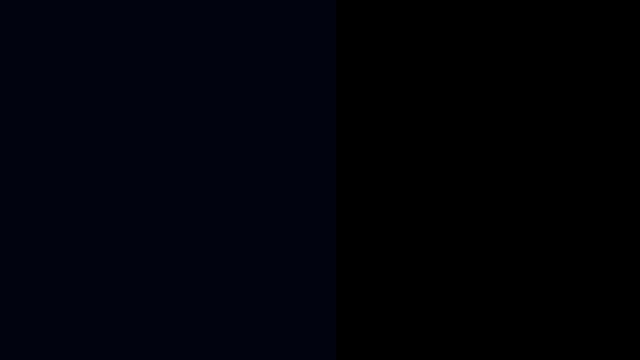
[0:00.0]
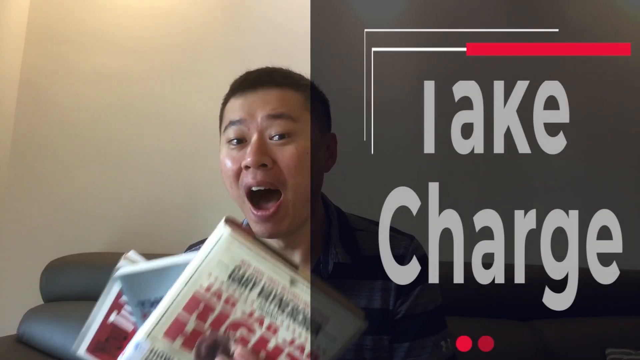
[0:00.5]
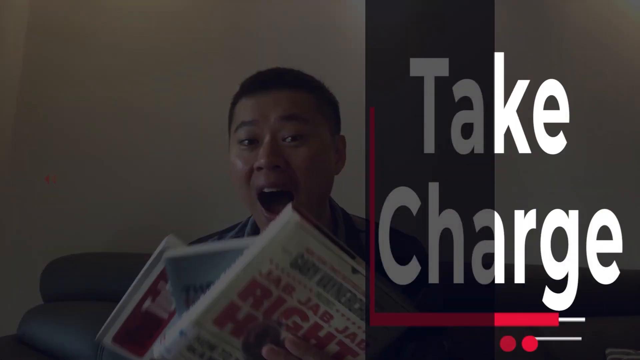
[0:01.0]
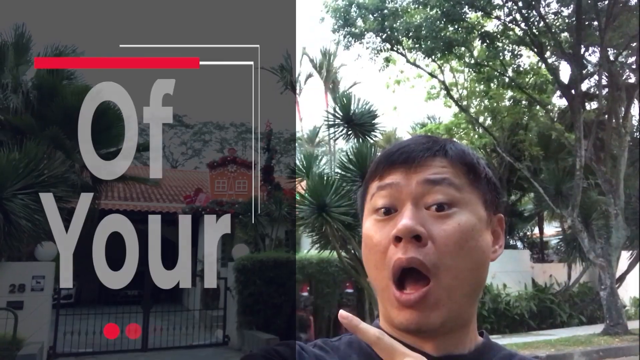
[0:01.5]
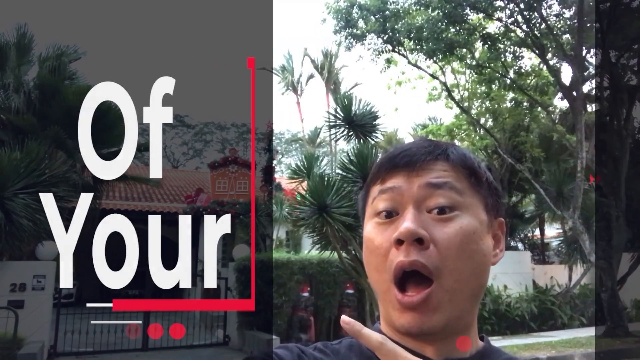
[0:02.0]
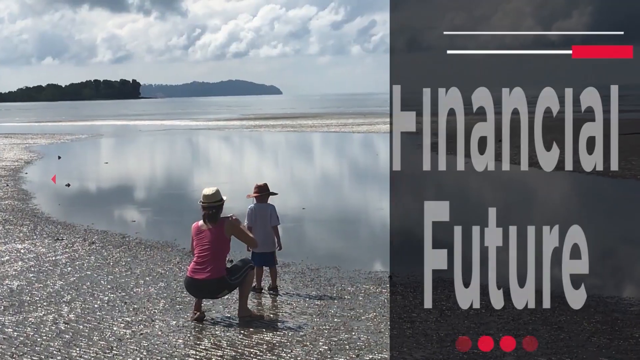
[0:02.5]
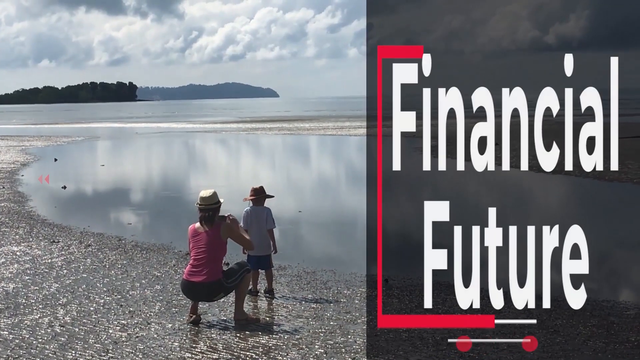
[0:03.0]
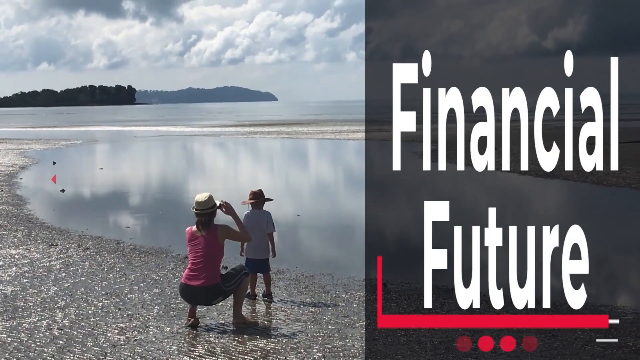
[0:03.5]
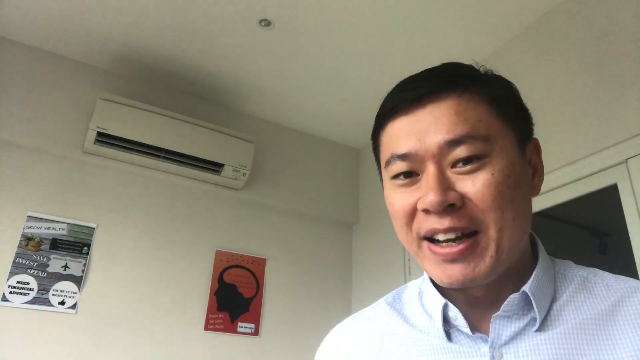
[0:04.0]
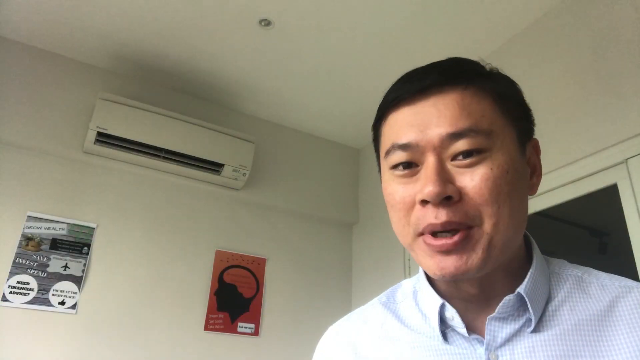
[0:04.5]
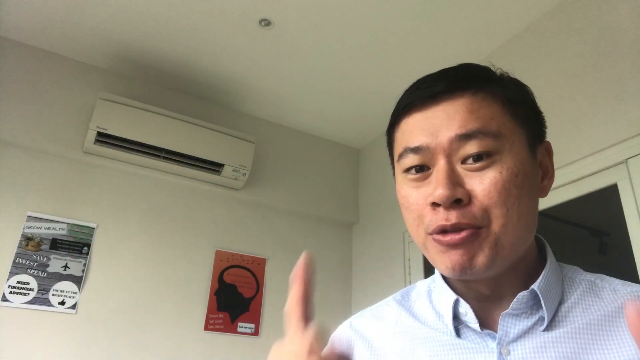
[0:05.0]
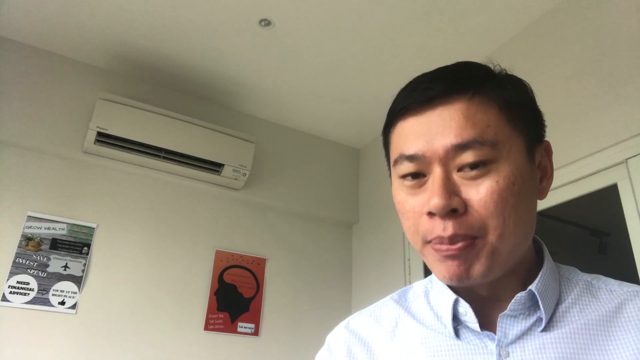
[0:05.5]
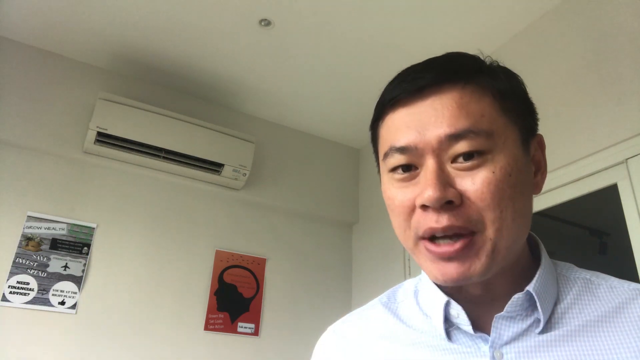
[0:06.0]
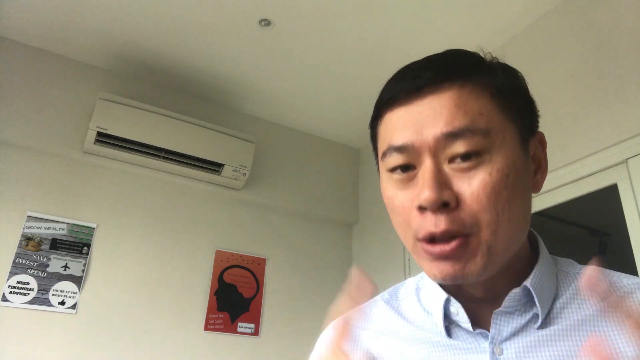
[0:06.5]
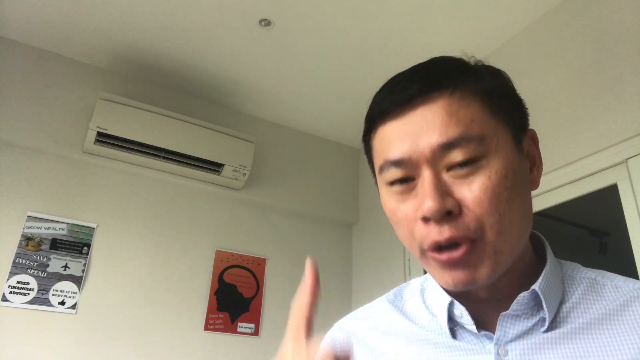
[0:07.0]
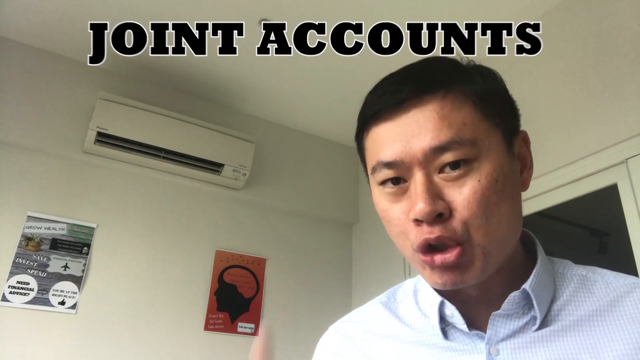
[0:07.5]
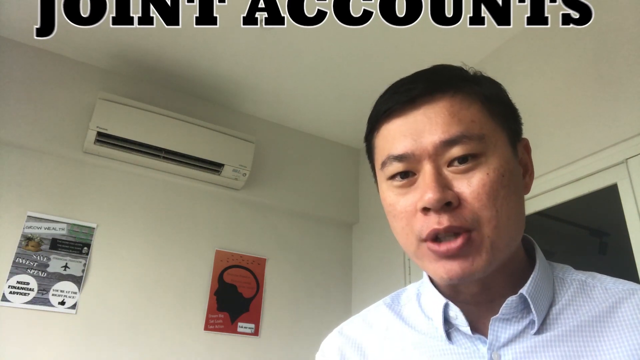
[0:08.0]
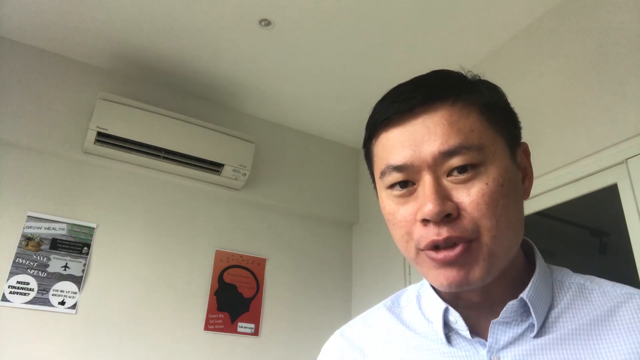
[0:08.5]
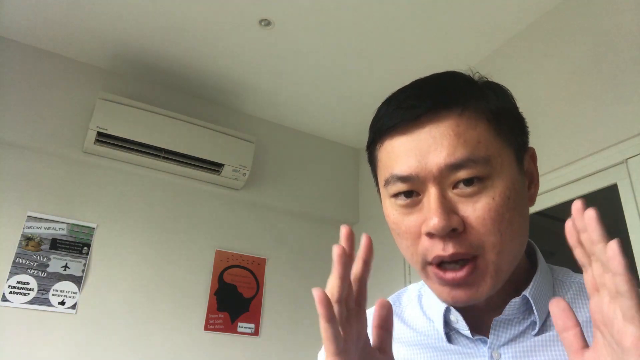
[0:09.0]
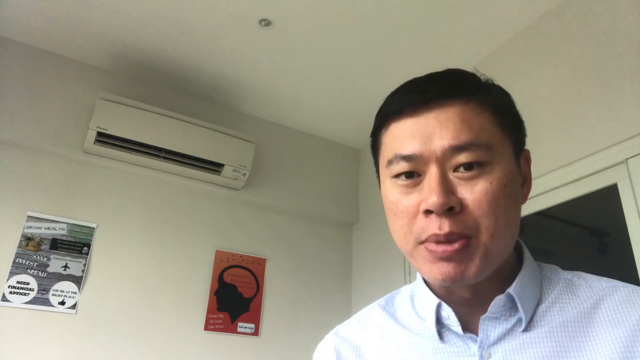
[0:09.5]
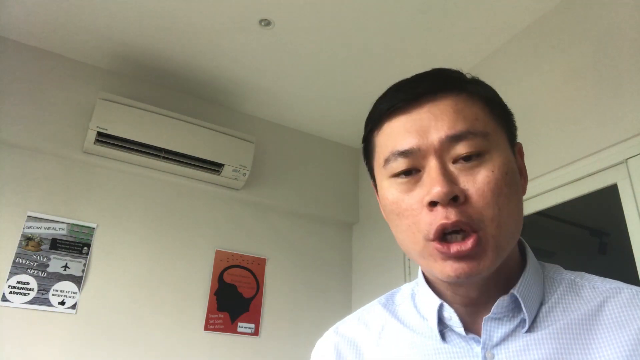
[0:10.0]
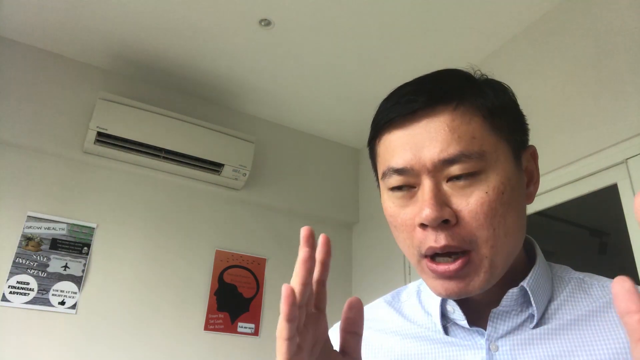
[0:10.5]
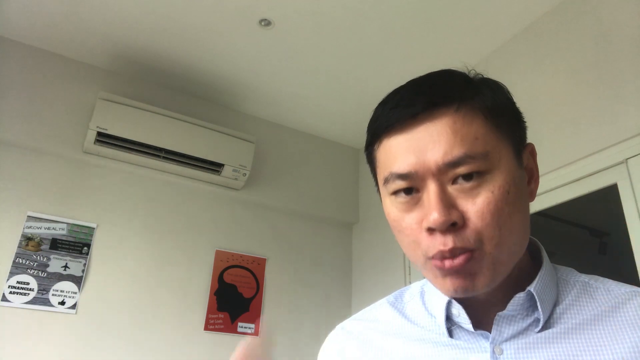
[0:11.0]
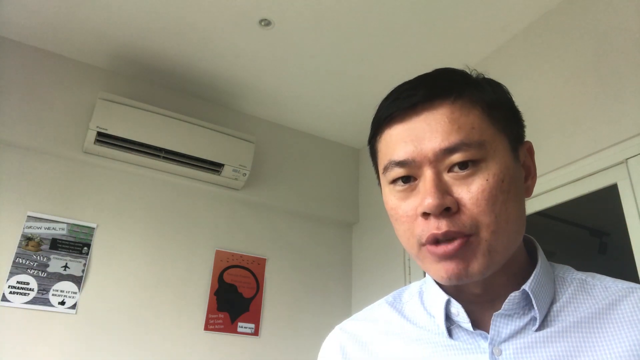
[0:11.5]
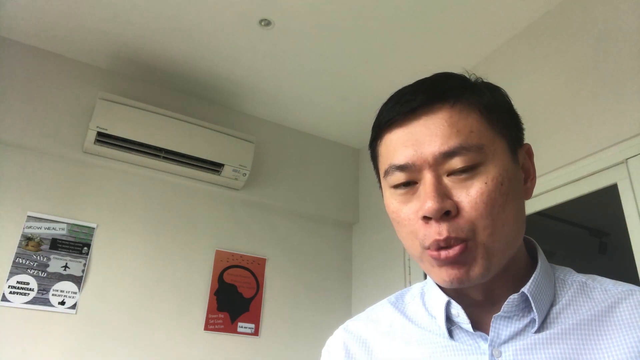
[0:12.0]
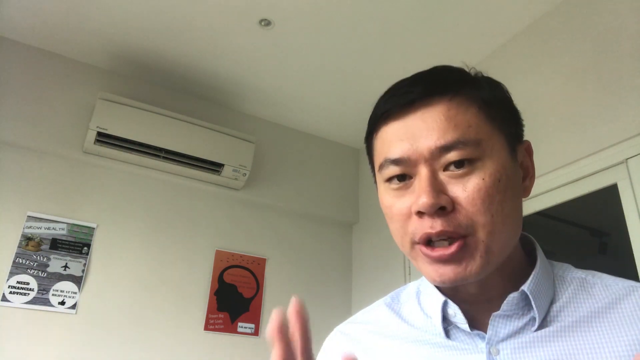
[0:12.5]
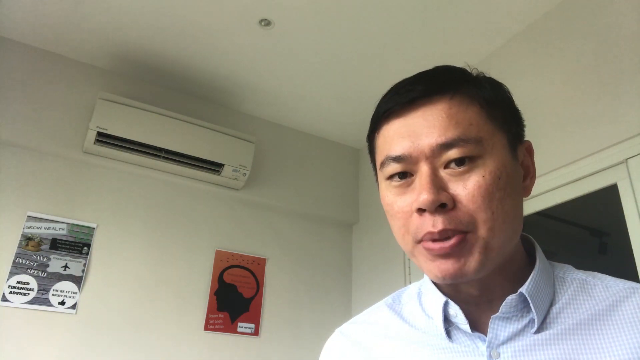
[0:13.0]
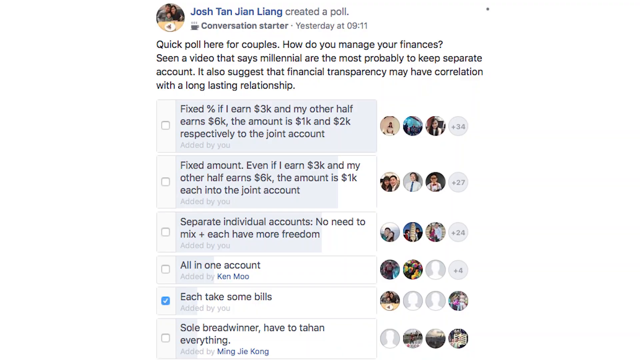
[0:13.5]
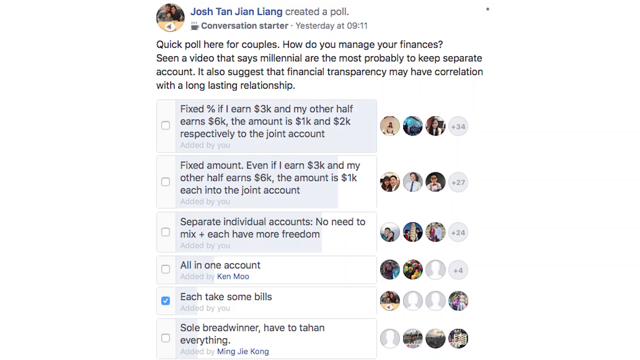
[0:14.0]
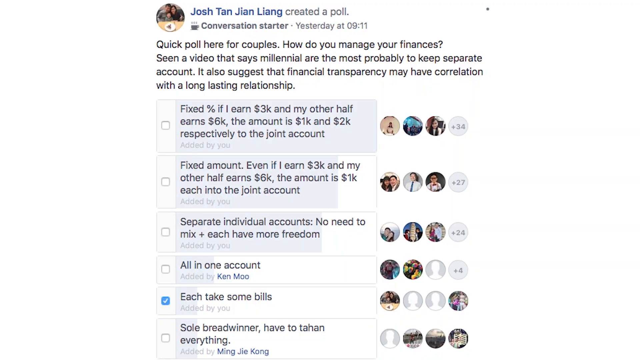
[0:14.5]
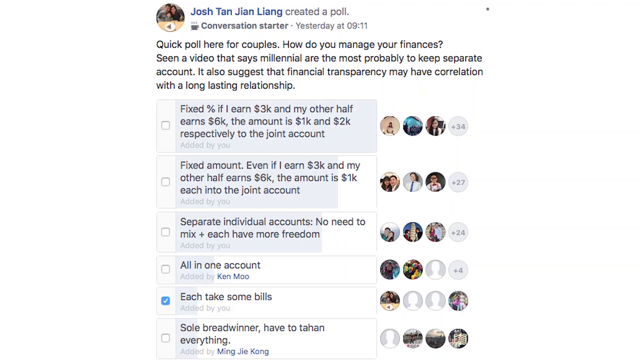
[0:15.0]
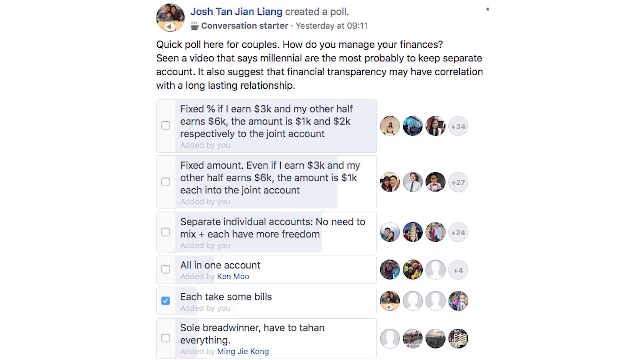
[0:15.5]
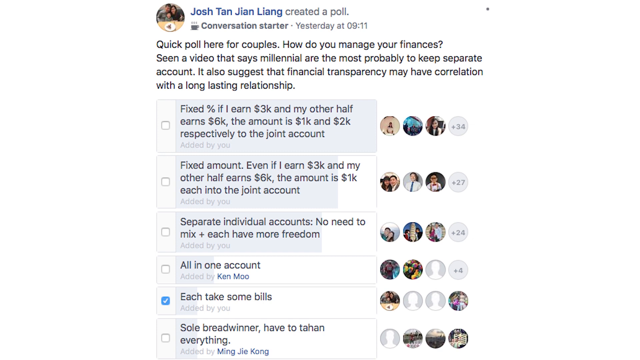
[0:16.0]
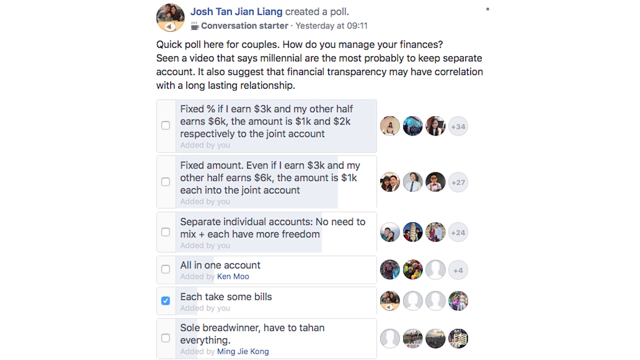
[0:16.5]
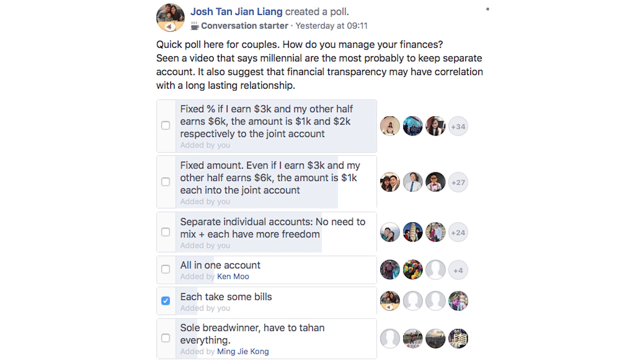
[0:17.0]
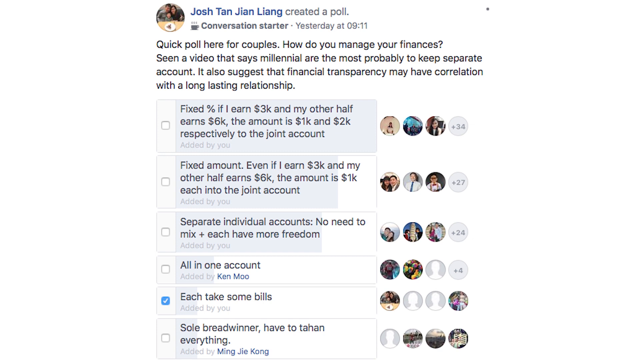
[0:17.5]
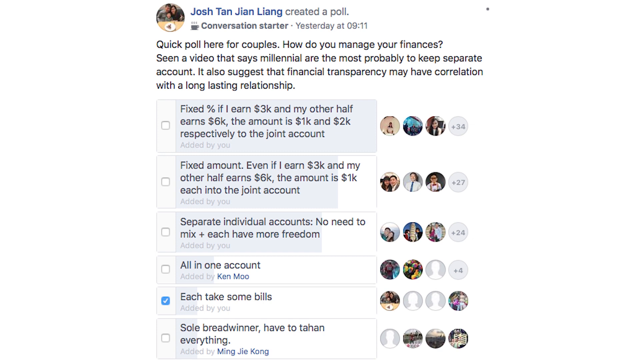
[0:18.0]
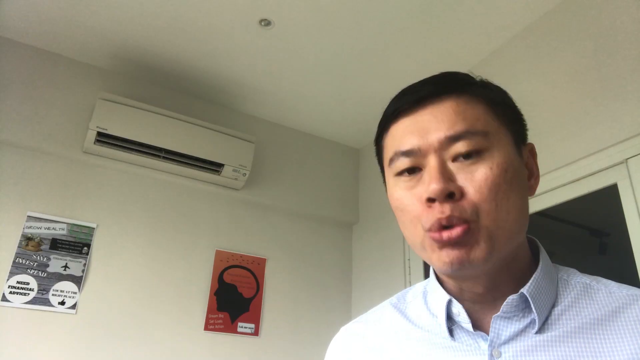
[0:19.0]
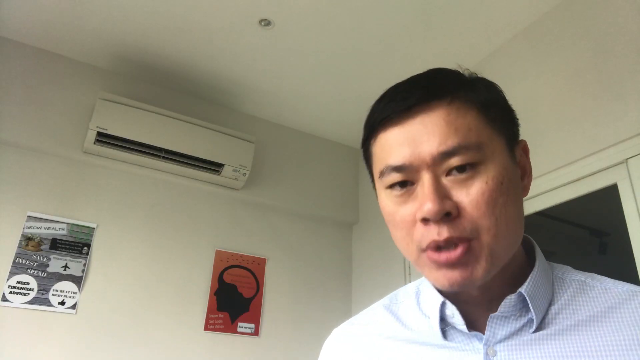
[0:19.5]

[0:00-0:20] An Asian man, apparently, gets very excited, screaming as the words "take charge" appear. He holds up different books, and one has text beginning "jab jab" on it. He is sitting on a couch, screaming; he wears a shirt with a collar, and his hair is shorter and kind of darker. "Take charge" appears big in white on a translucent, darker gray box with a double line at the bottom, and a red rectangle goes around "take charge", animated from left to right. Next he is outside, kind of posing in front of a house. The setting looks tropical, with a couple of tropical plants, hedges and a fence. The words "of your" appear as he kind of points off to his right, with a red outline again going around the words. A woman is then shown kind of squatting with a little boy in front of her; they look like they are at some kind of pond or ocean, hard to tell, though it looks almost like a pond or lake. A couple of sets of trees stand in the distance, along with clouds, and "financial future" appears in white on the right. The man is then seen kind of standing in what is apparently an office. What looks like an air conditioning unit is at the top left of the back wall. There is also a poster that says "save" followed by something else, with a couple of white circles, and an orange poster with a brain, like the silhouette of a head with writing in the middle. He stands off to the right, kind of talking, as the words "joint accounts" appear and then go away at the top. He moves quickly and talks fast. The video then goes to Twitter, with what looks like a post by Josh Tan: a quick poll for couples asking "how do you manage your finances?" with different checkmark boxes, and on the right little thumbnails of the different people who checkmarked one of the options.